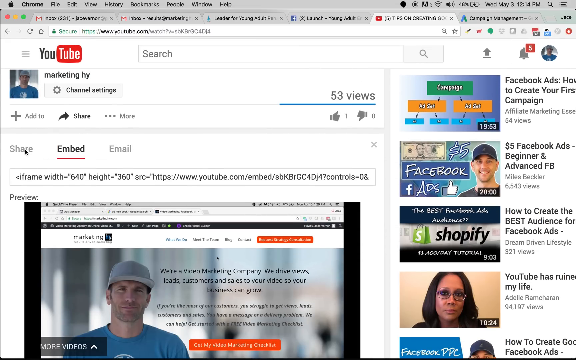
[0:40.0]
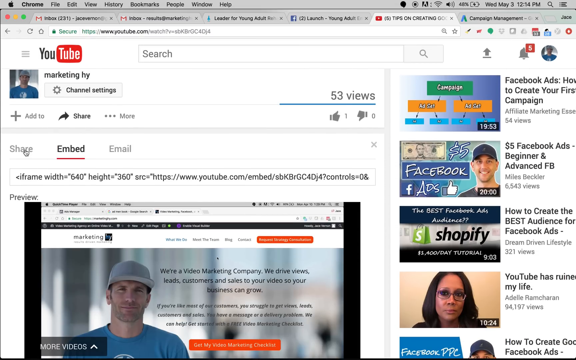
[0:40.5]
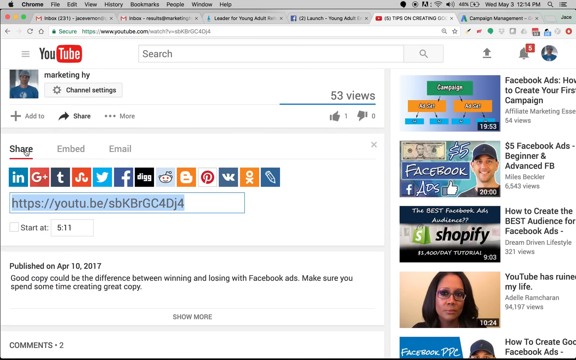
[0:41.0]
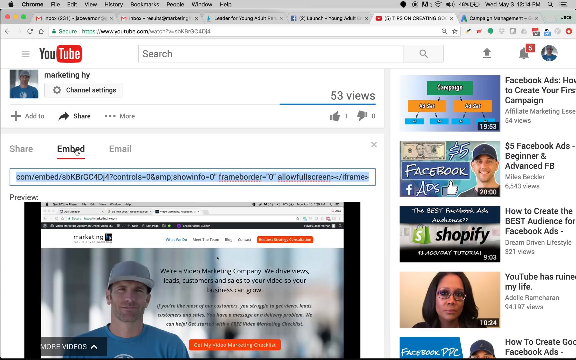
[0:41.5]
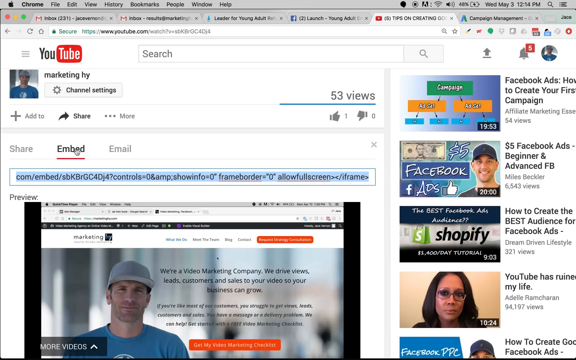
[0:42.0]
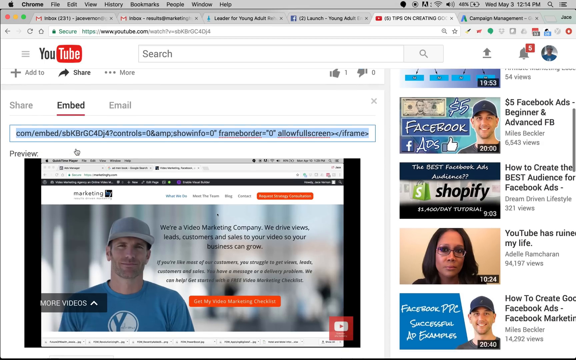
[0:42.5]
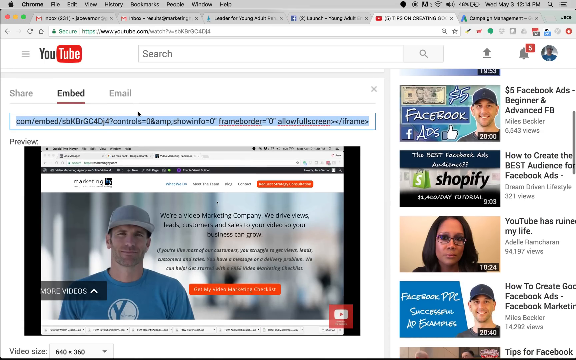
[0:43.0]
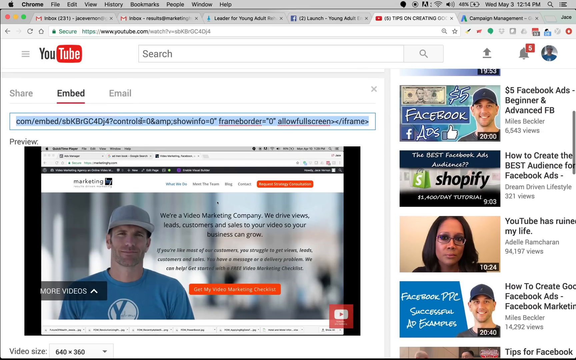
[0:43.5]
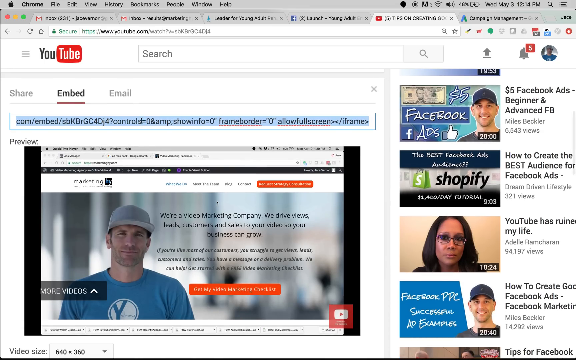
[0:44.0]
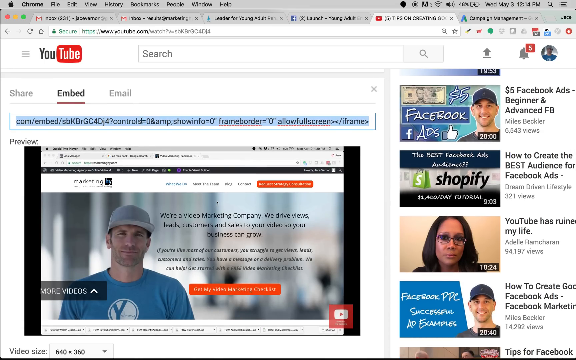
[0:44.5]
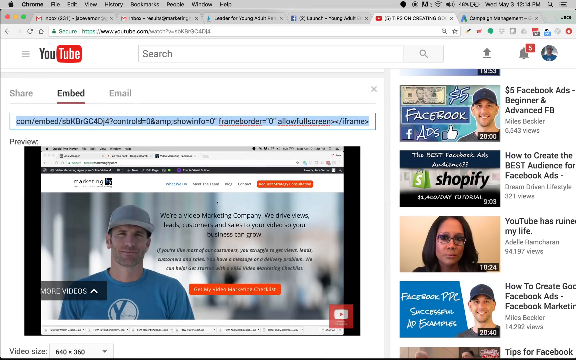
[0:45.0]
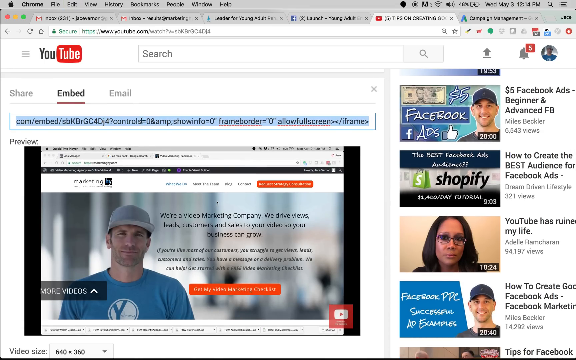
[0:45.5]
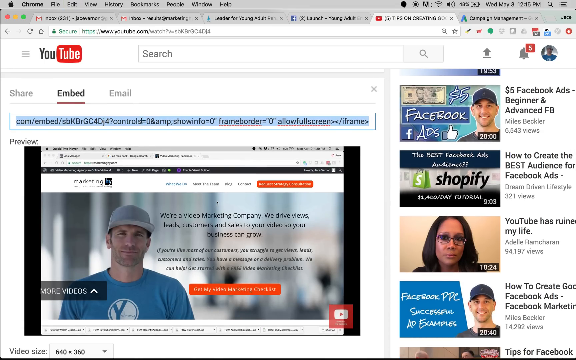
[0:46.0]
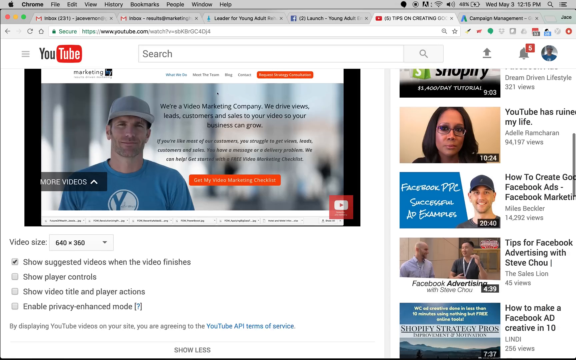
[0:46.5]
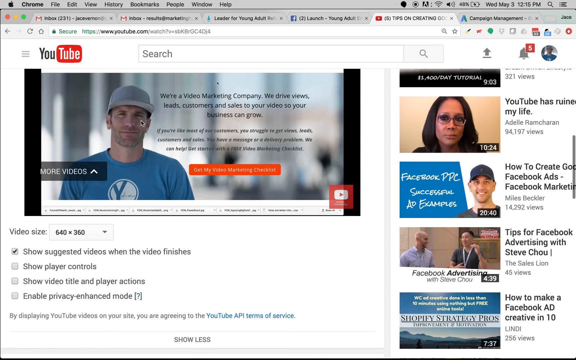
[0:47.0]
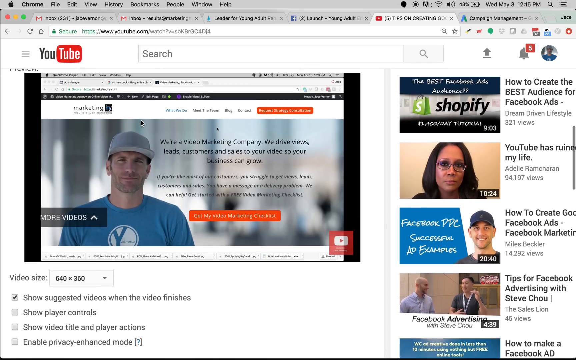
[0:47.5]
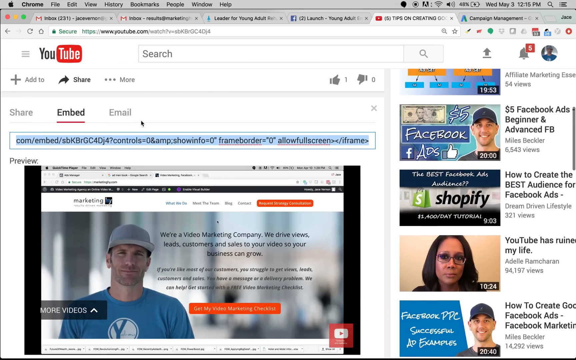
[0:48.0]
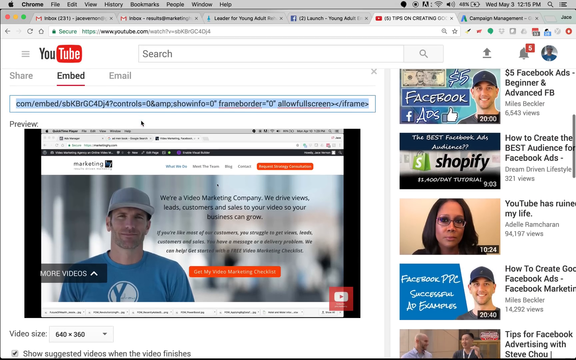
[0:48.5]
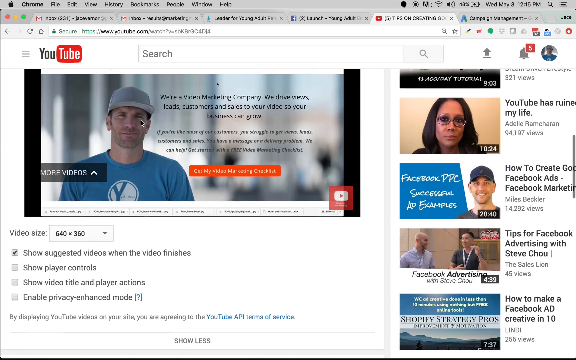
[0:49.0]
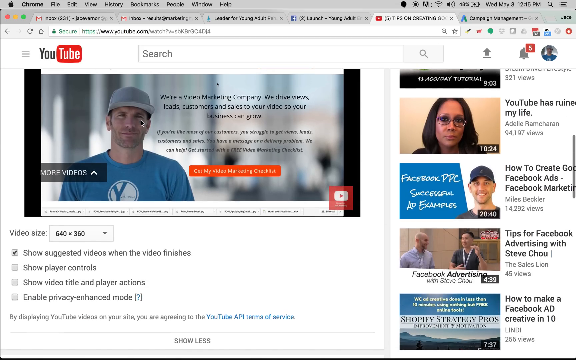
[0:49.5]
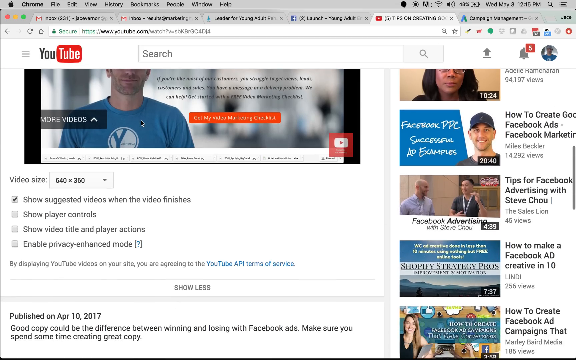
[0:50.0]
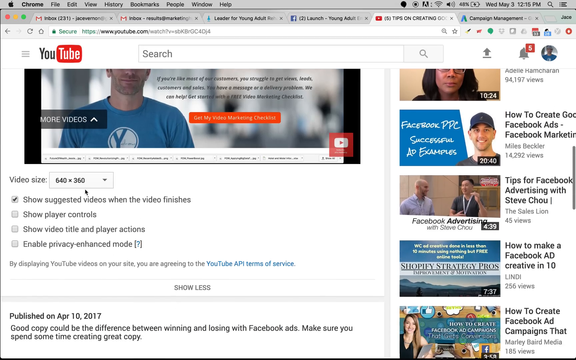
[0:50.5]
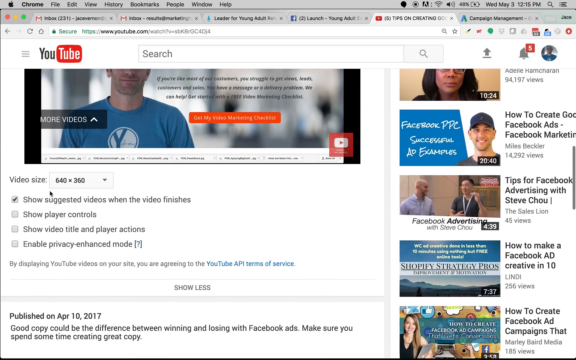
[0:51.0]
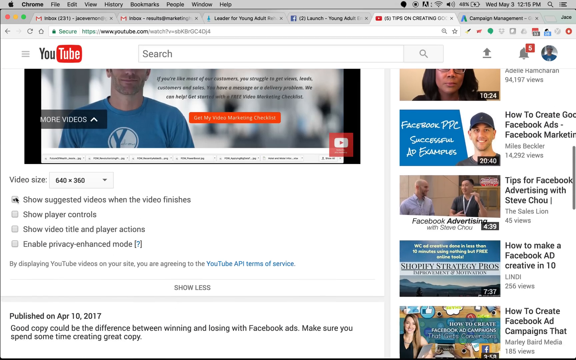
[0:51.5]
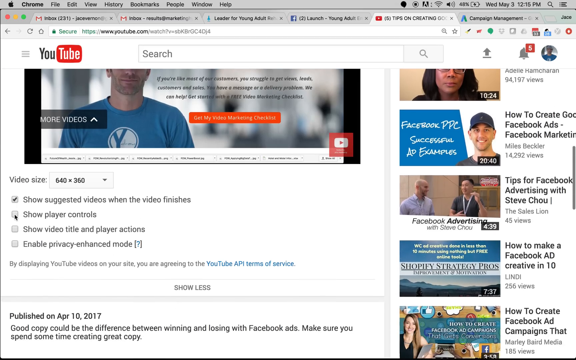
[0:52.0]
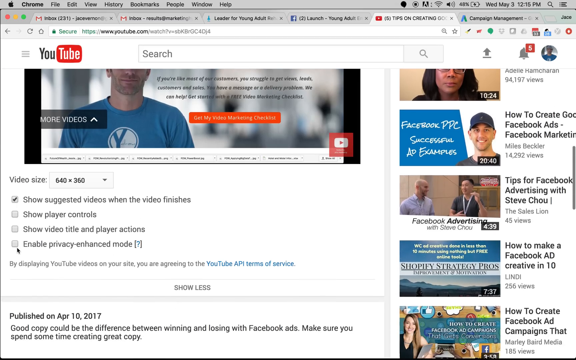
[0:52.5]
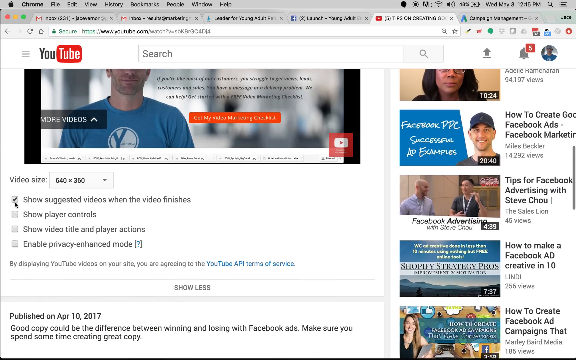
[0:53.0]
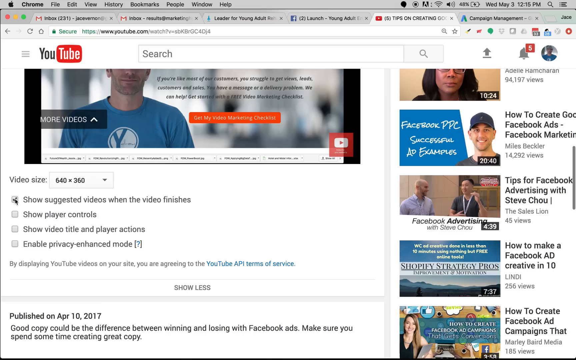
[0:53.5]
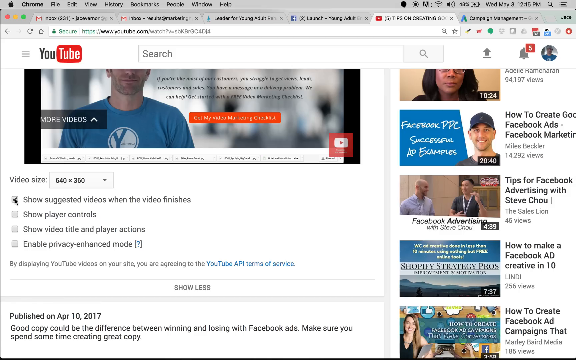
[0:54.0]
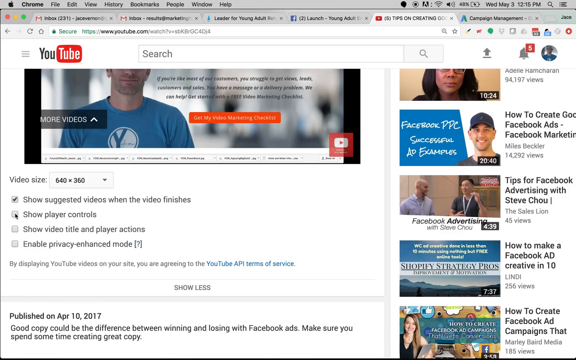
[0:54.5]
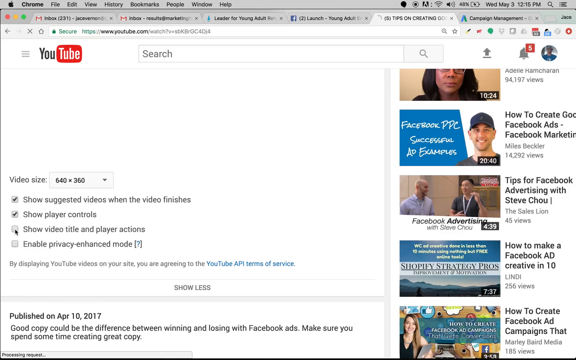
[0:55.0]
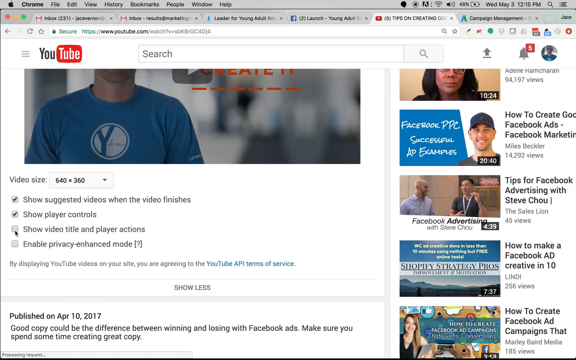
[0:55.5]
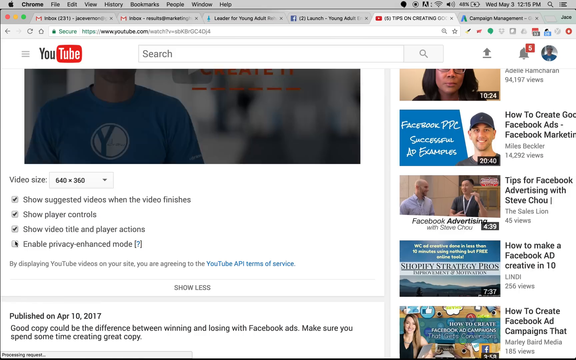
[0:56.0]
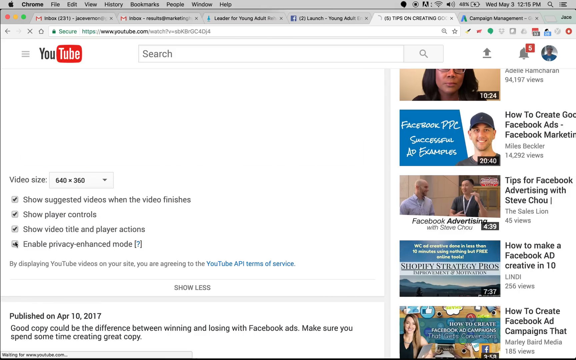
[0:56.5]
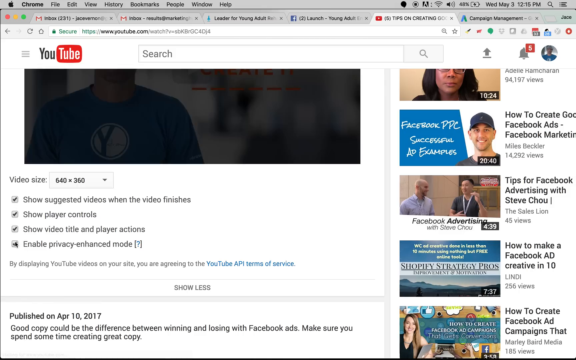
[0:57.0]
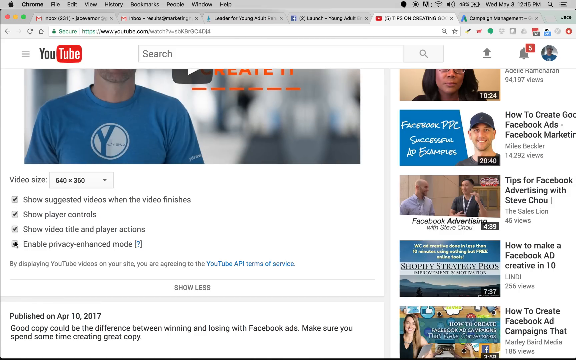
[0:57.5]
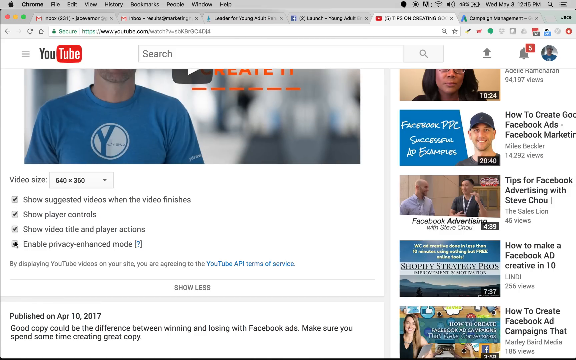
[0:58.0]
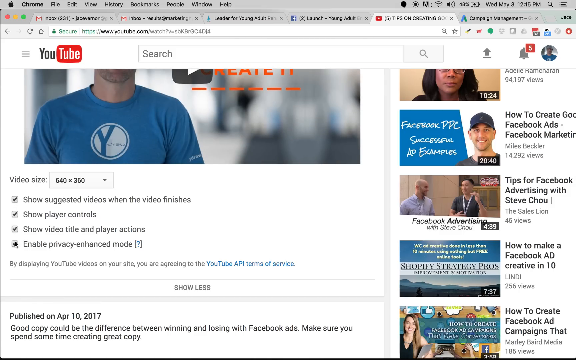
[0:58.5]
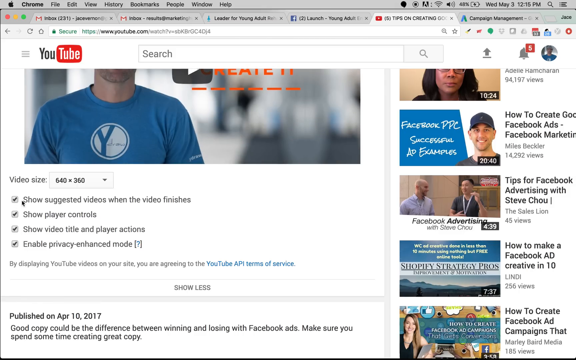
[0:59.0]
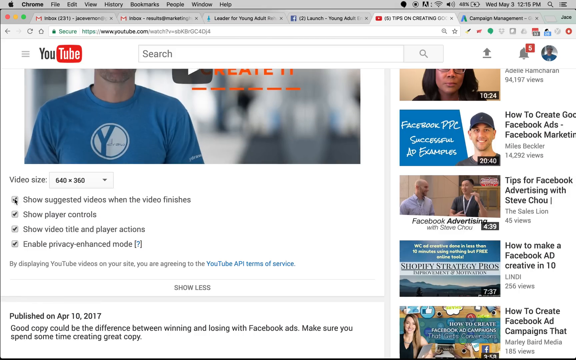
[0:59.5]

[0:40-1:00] Someone is sharing their computer screen, apparently from a Mac, since a Mac Apple logo is in the top left-hand corner. The person is searching on YouTube, and six tabs are open at the top of the screen; the one shown is the fifth tab. They appear to be searching for information on how to create Facebook ads successfully. They have chosen a video, clicked on the embed link and highlighted it, presumably to copy and paste it into something they are working on. Lots of different videos have popped up on the right-hand side. Underneath the selected video, the video size is 640 by 360, and the box "show suggested videos when the video finishes" is ticked.